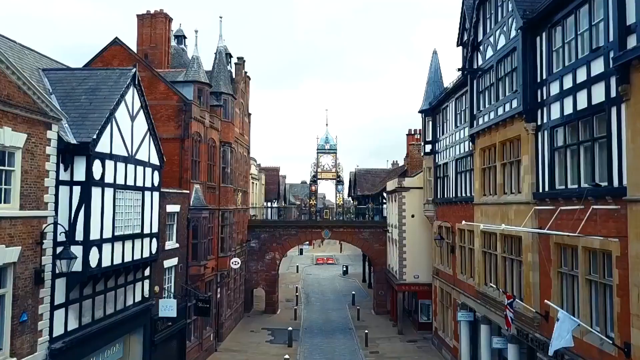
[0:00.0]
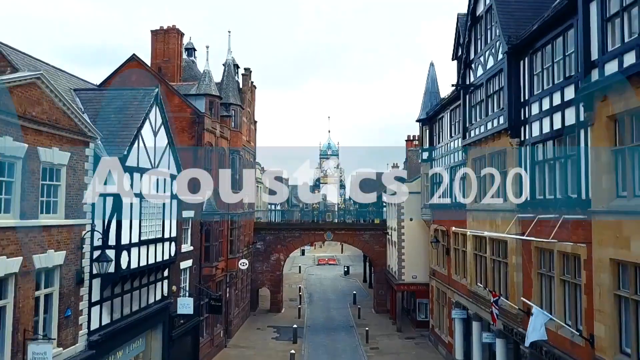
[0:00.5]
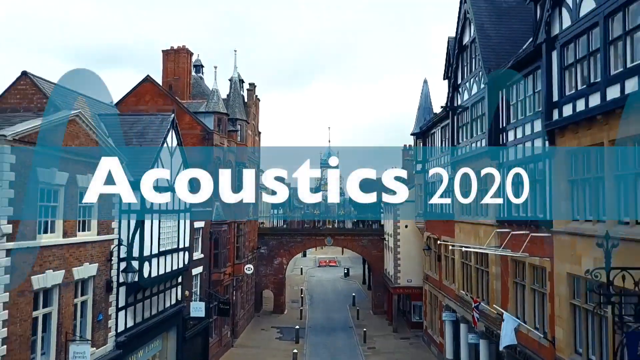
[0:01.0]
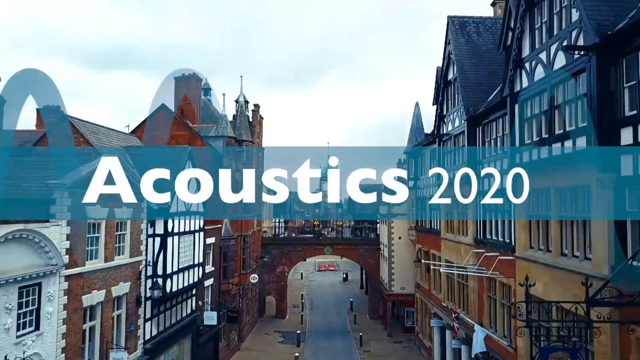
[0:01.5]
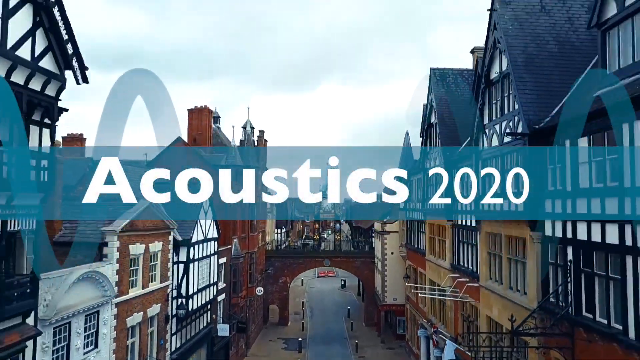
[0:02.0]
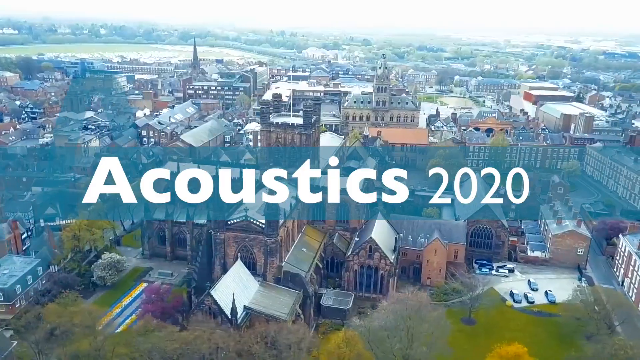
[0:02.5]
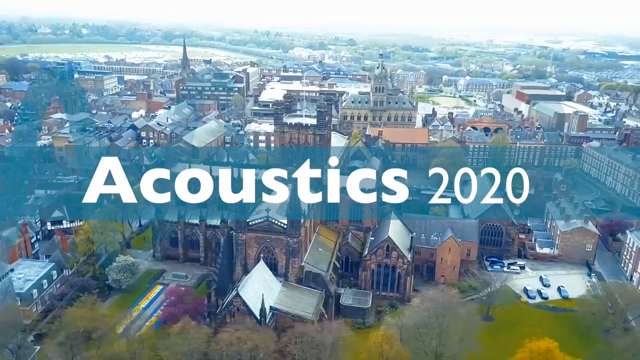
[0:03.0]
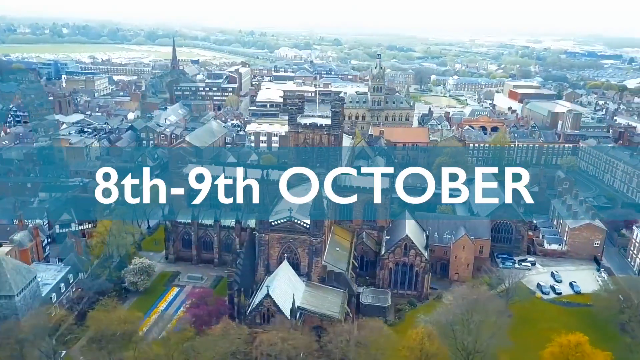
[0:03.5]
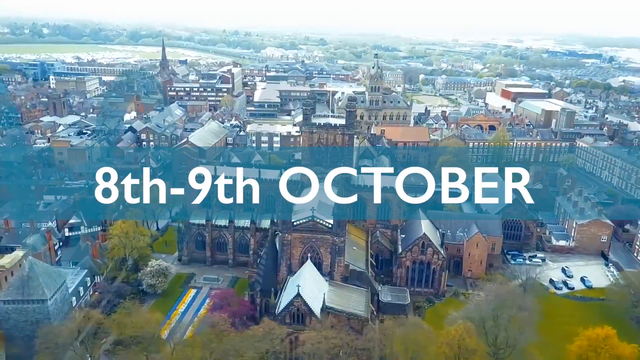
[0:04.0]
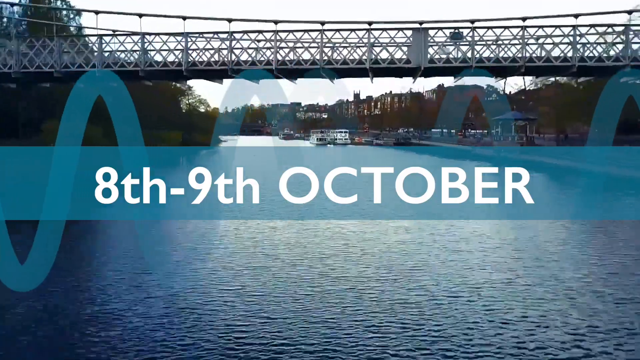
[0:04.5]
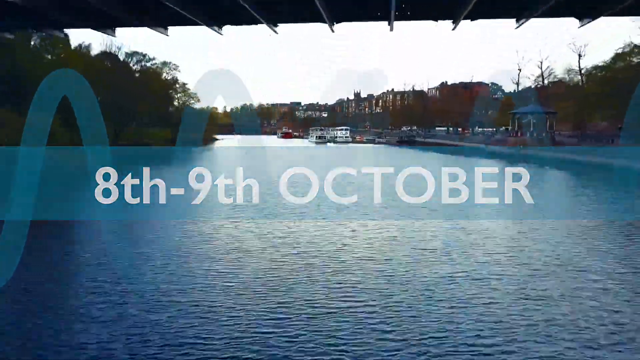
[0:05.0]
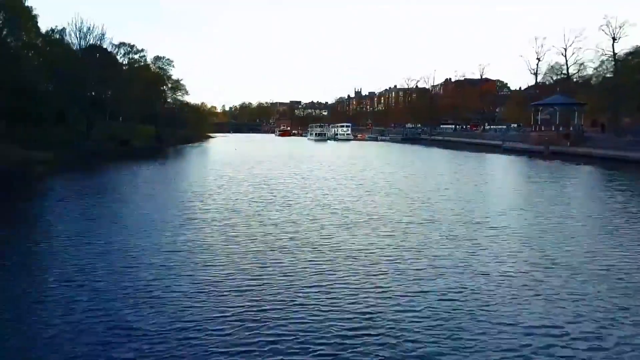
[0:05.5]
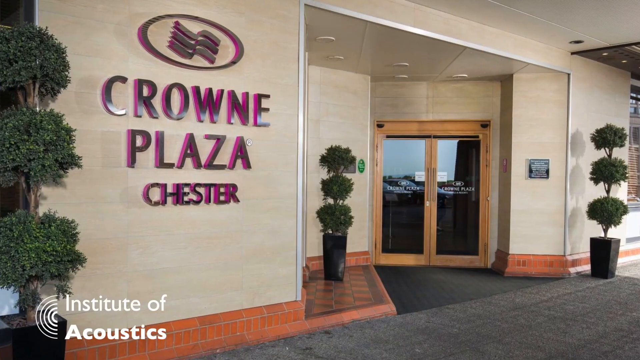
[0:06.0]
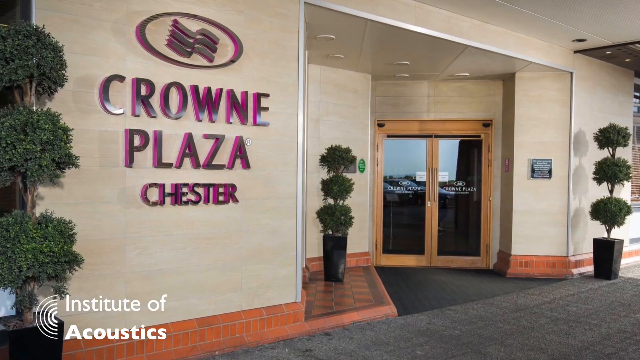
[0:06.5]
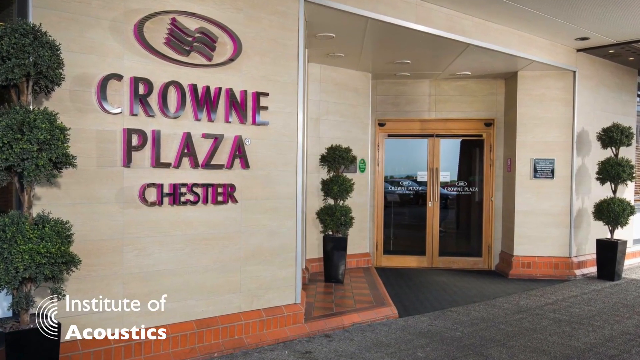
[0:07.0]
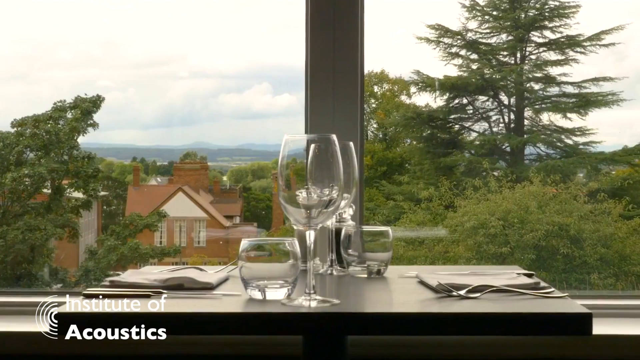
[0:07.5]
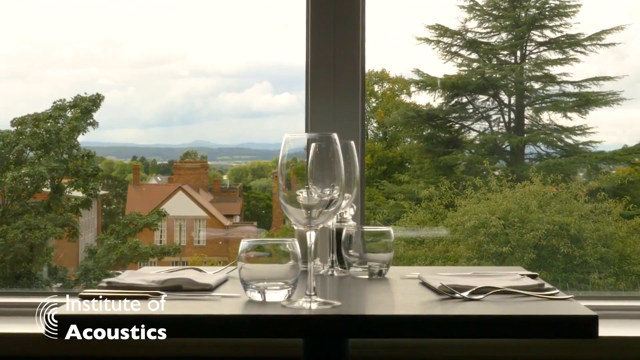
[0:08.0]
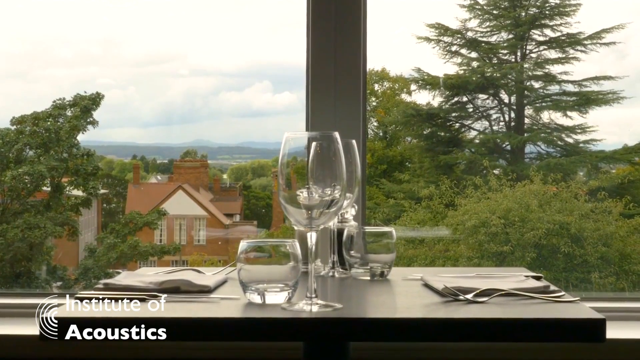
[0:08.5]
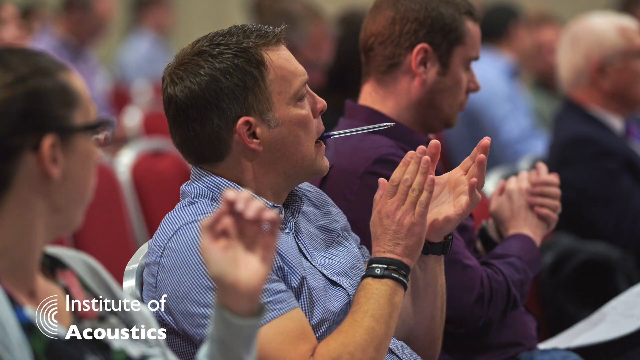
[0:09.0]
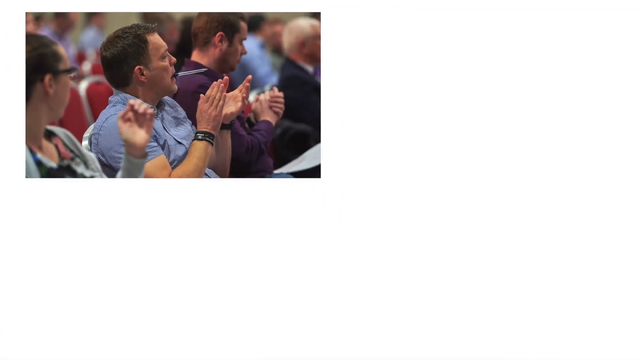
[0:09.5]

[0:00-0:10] A town appears in street view, with some fairly big stores, houses, and a little bridge. It is daytime, with a blue sky. Text reads "Acoustics 2020." A big aerial view of the town or city follows, with text reading "the 8th through the 9th of October." A big body of water is visible, with a riverfront. Text reads "Crowne Plaza of Chester," and there is a big building. A table is then shown with wine glasses, other little cups and forks set up as if someone is about to be served dinner.